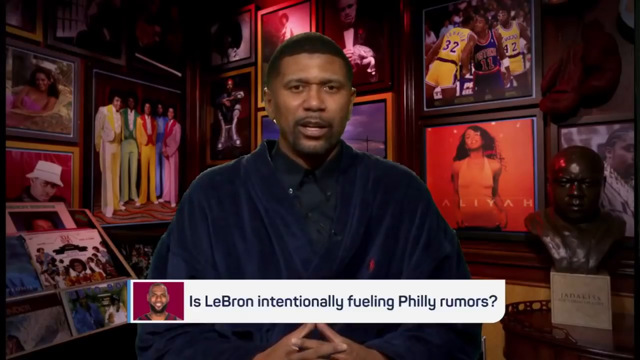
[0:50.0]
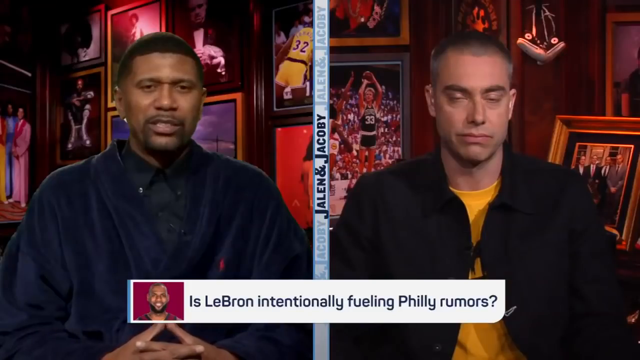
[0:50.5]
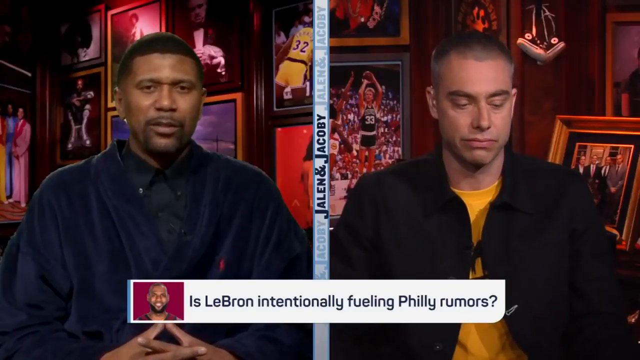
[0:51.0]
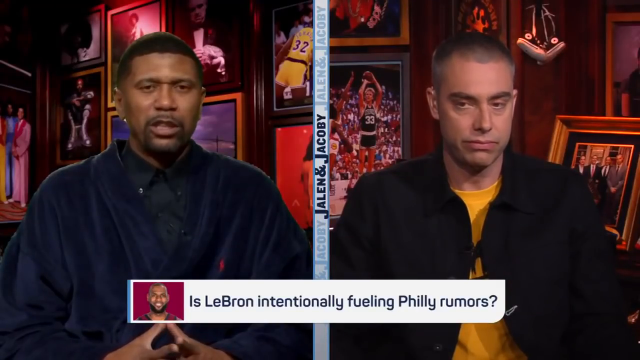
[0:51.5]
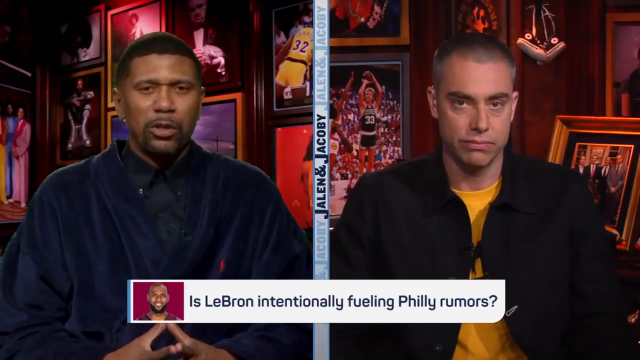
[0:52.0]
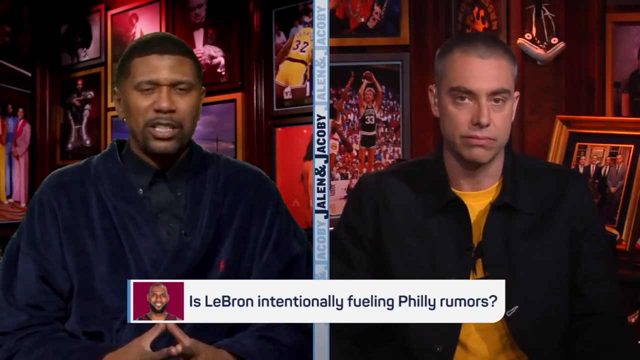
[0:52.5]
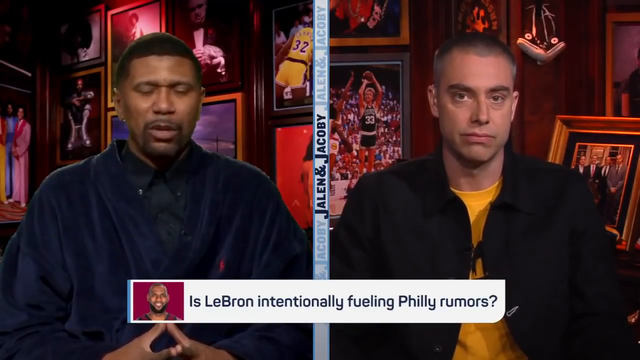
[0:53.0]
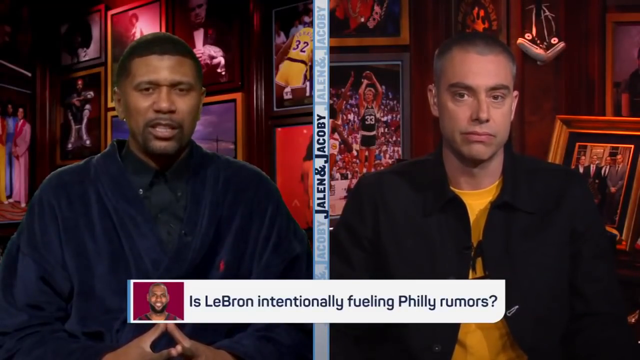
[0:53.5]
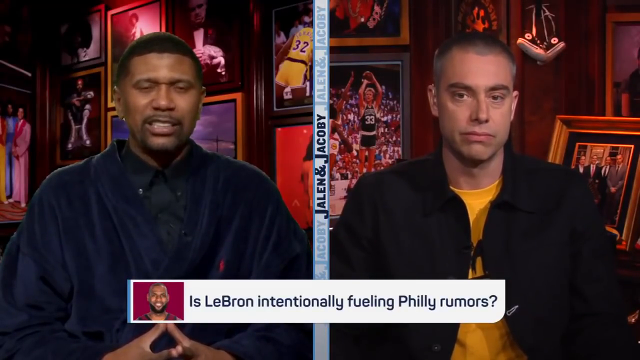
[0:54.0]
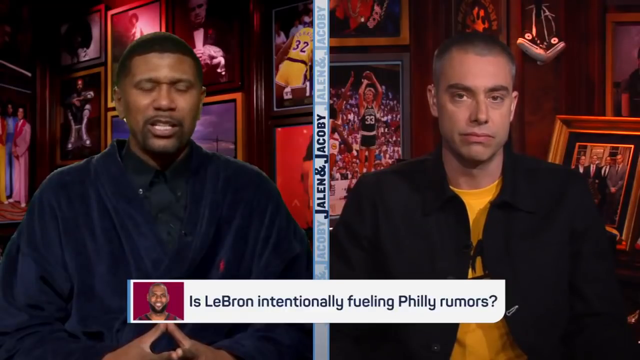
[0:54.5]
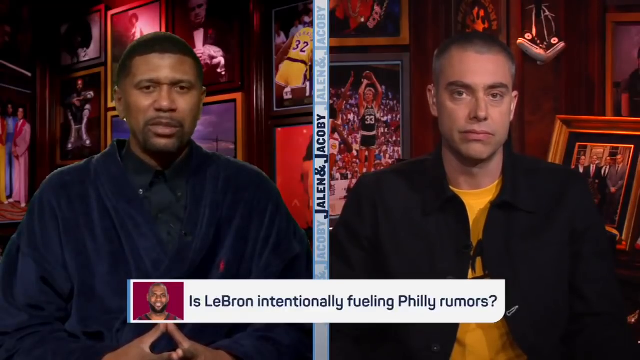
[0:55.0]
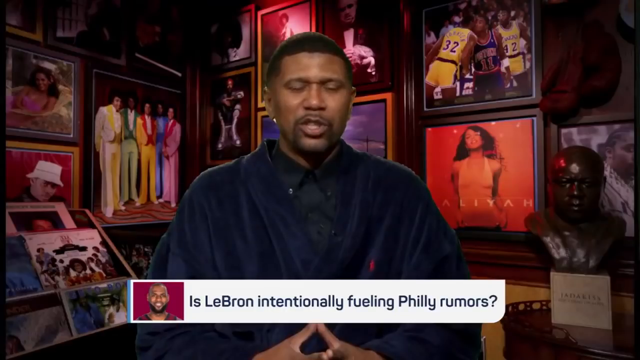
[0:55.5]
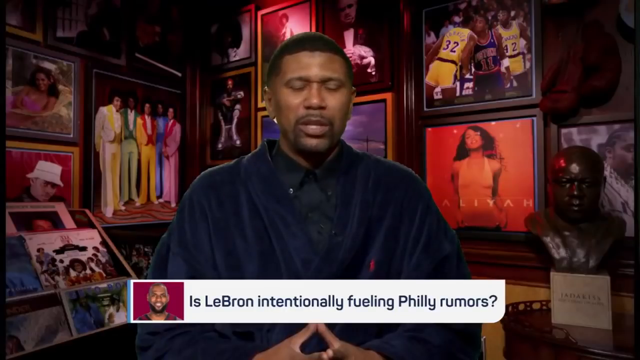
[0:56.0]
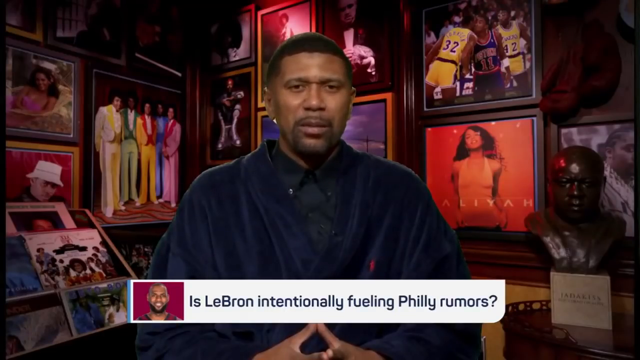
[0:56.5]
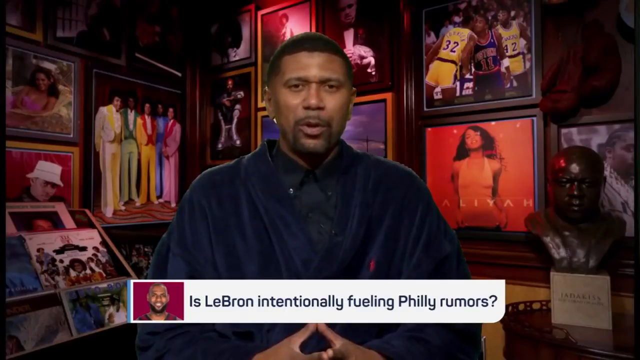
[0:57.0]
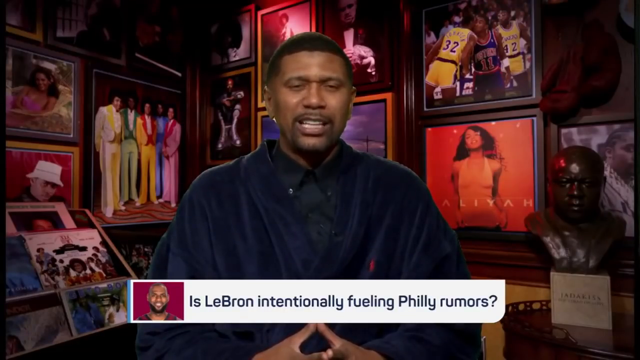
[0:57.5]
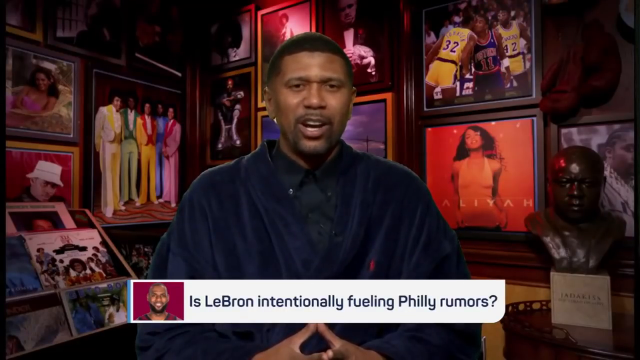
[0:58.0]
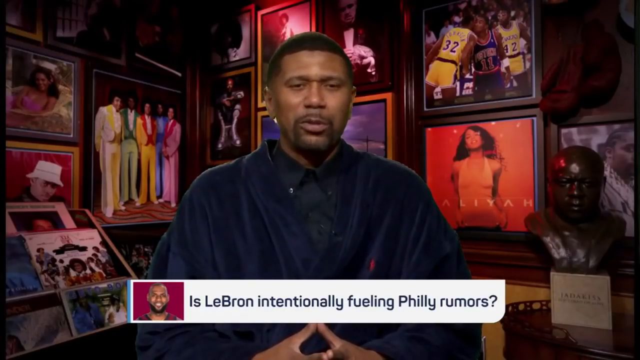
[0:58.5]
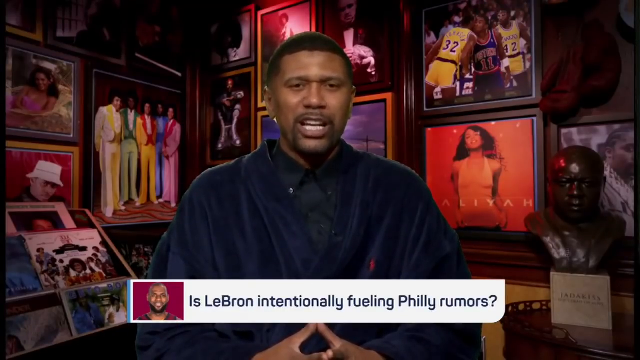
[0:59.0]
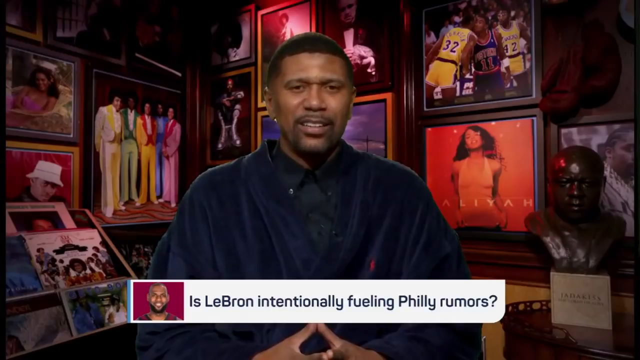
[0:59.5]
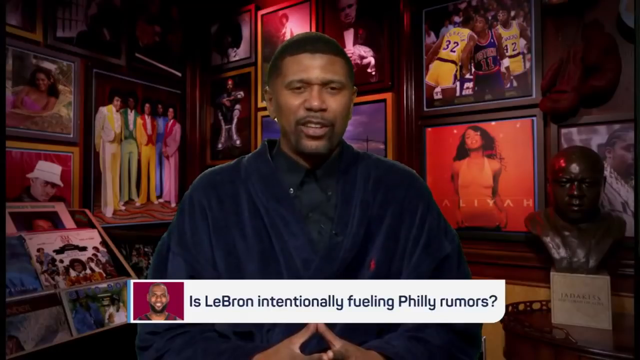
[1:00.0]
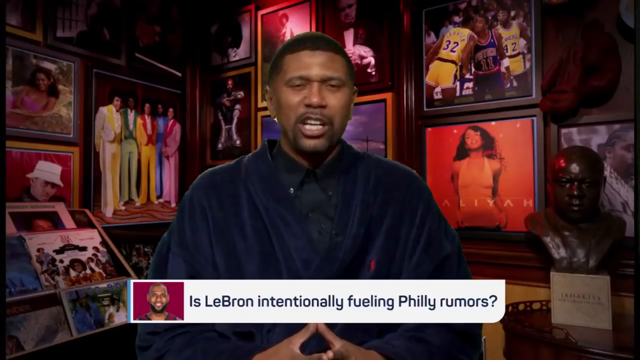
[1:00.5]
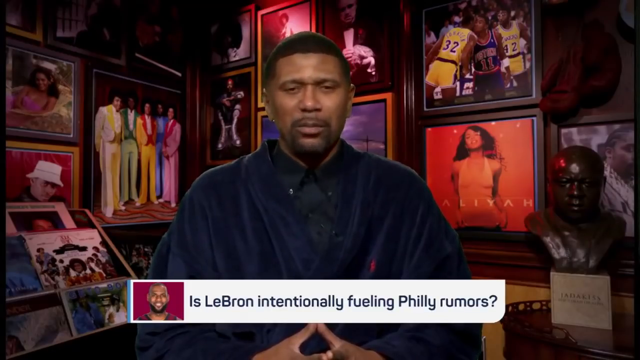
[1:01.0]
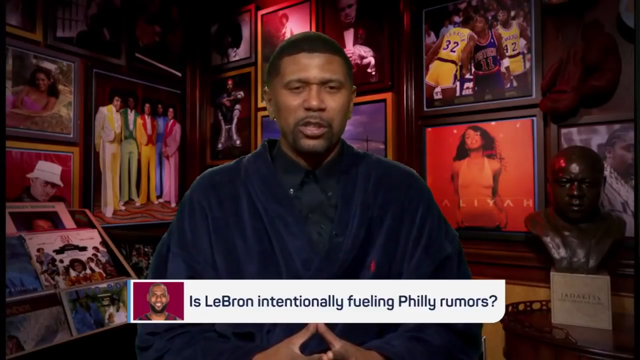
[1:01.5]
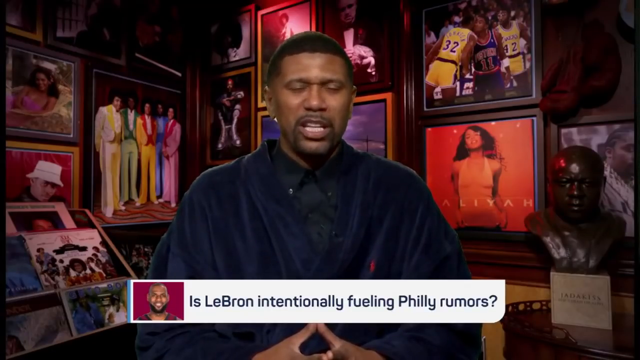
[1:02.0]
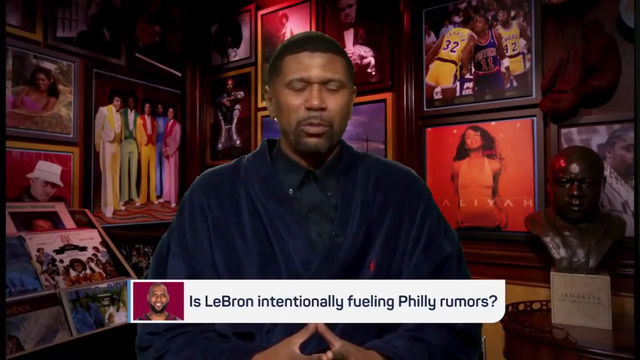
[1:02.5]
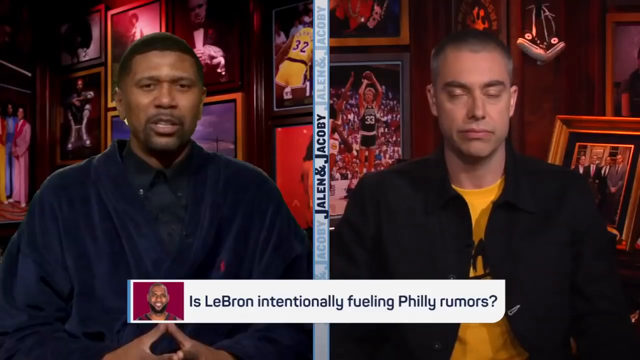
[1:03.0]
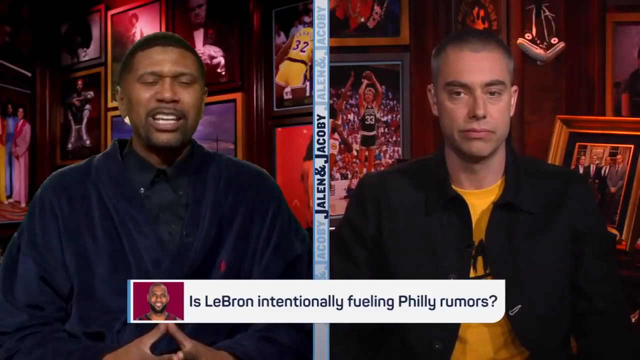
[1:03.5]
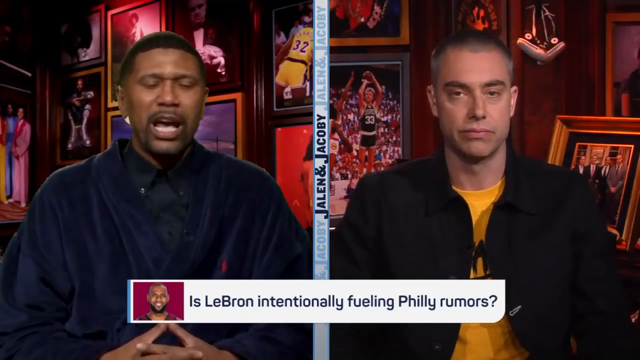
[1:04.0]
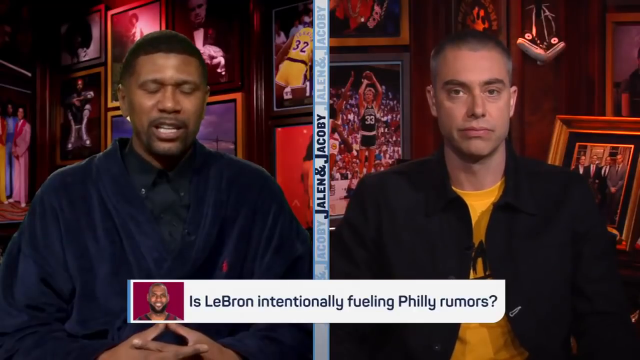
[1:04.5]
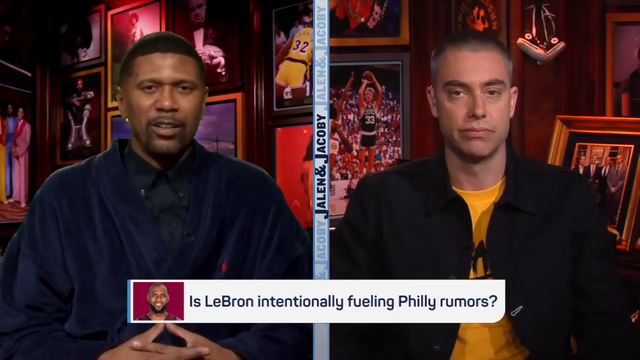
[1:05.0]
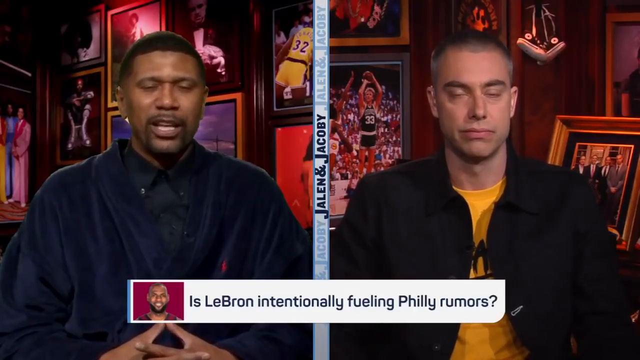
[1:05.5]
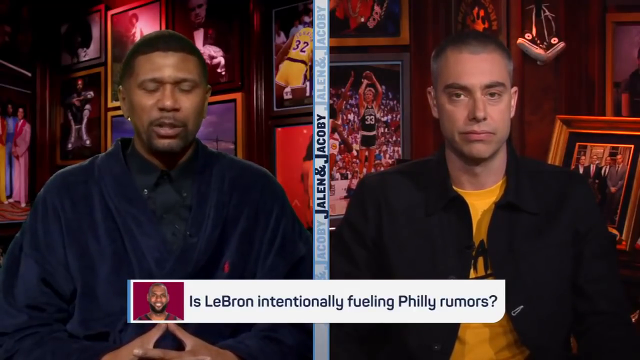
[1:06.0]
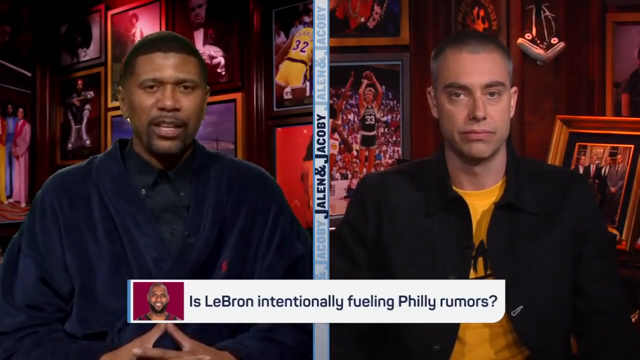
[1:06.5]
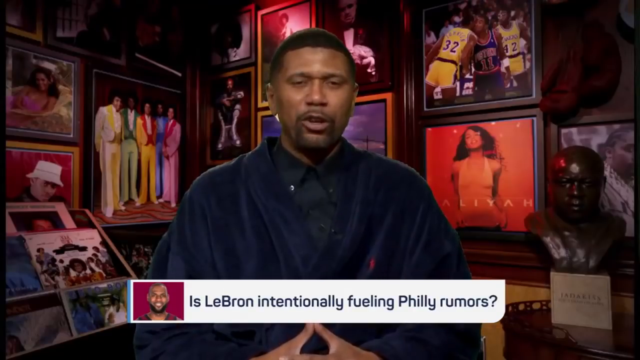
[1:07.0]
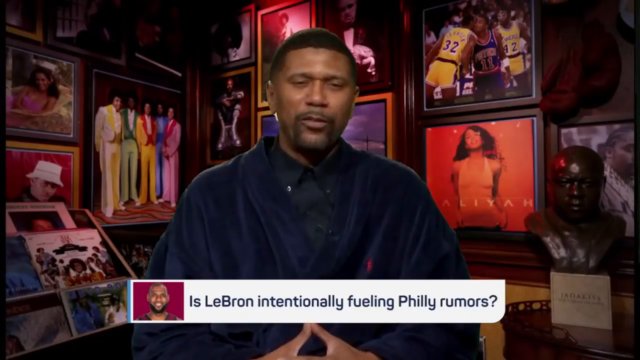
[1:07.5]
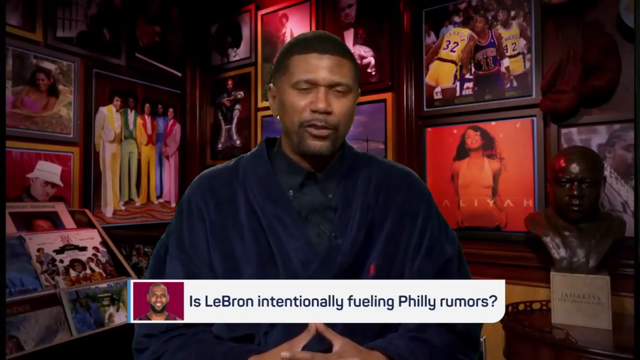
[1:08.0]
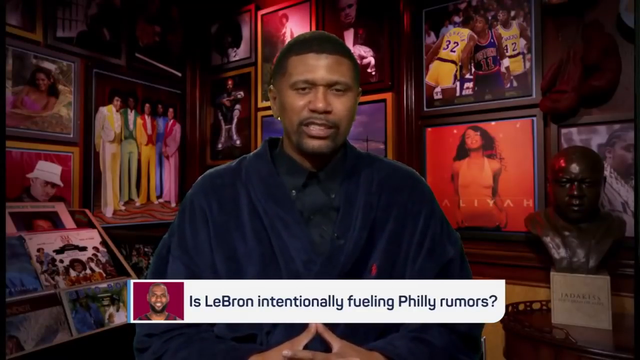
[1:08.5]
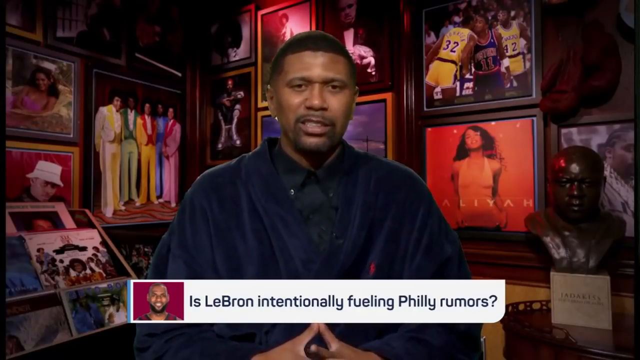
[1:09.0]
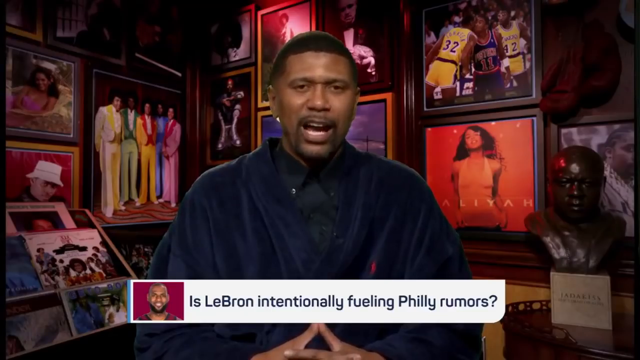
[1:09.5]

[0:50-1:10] A zoomed-in shot shows Jalen Rose with his hands crossed, wearing a dark outfit with some sort of red lettering that is hard to make out in detail; he has a goatee and dark hair. The video goes back to the studio split screen with the man on the right, then switches back to Jalen Rose, who has albums of artists, sports memorabilia and much more behind him. It then zooms back out, with both men bantering.